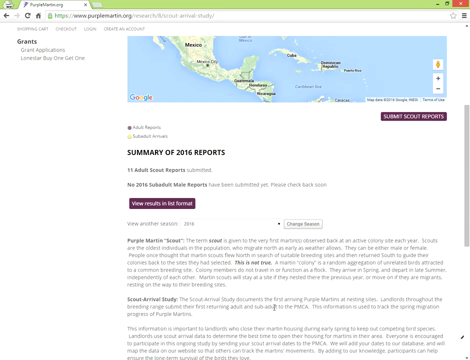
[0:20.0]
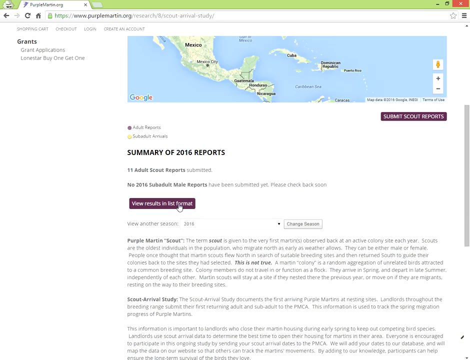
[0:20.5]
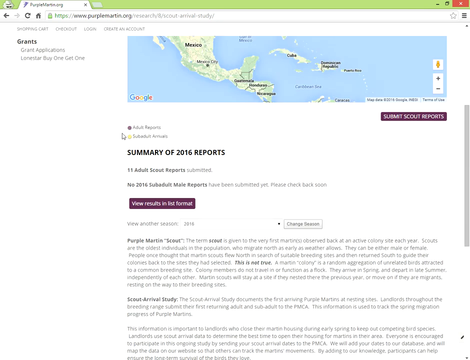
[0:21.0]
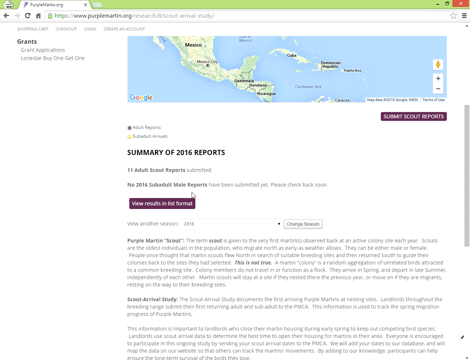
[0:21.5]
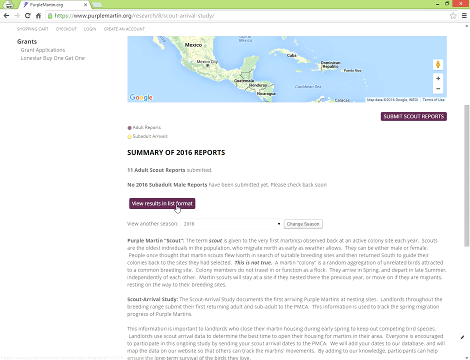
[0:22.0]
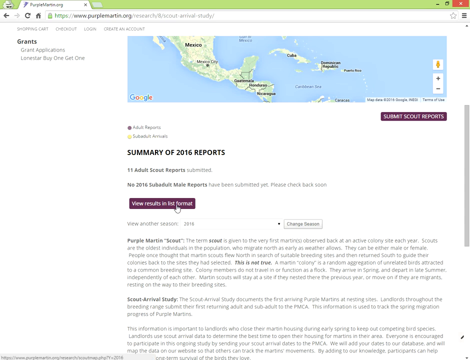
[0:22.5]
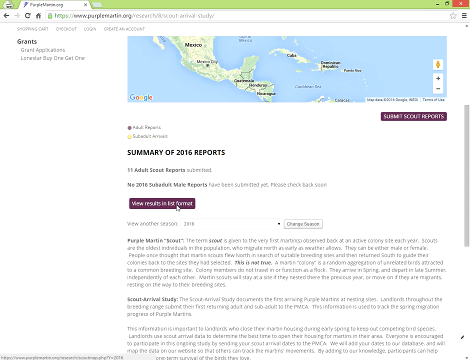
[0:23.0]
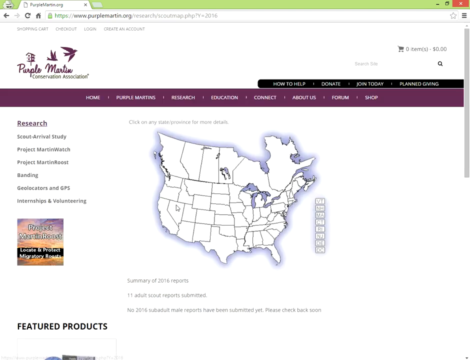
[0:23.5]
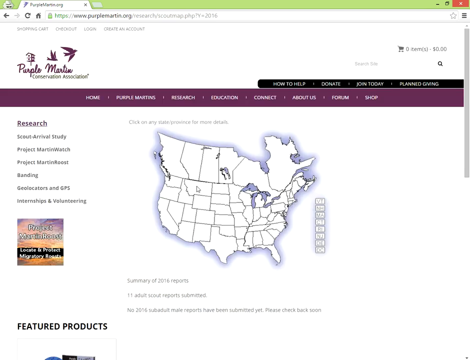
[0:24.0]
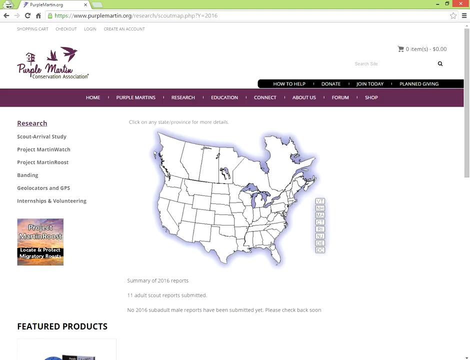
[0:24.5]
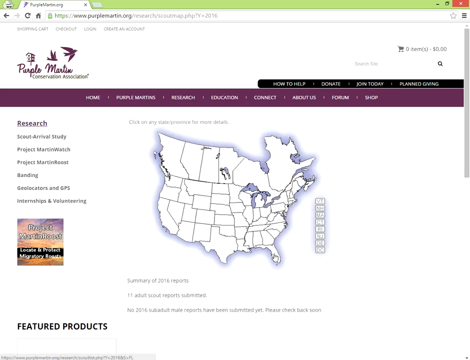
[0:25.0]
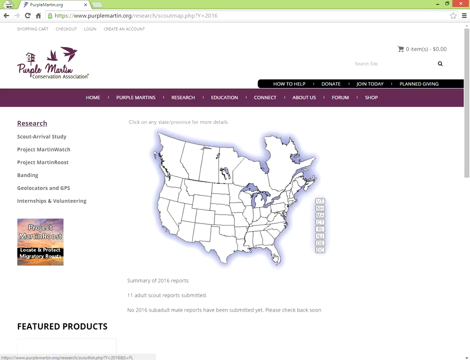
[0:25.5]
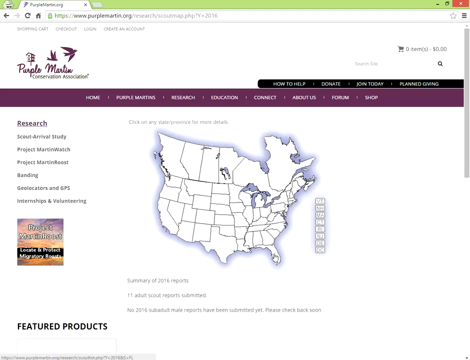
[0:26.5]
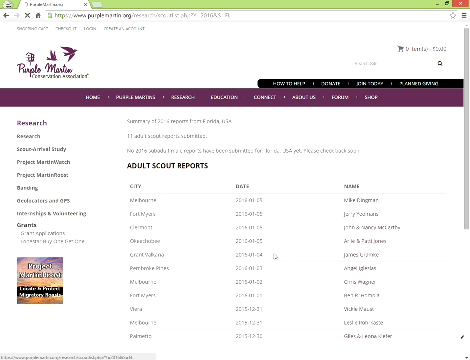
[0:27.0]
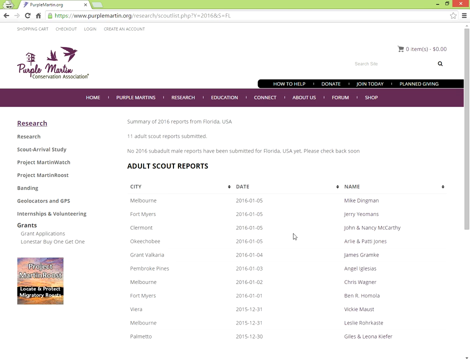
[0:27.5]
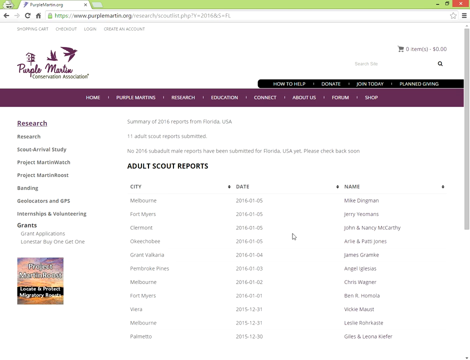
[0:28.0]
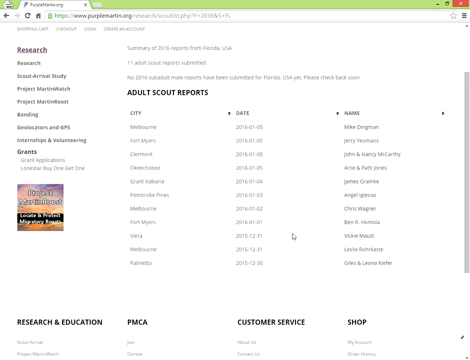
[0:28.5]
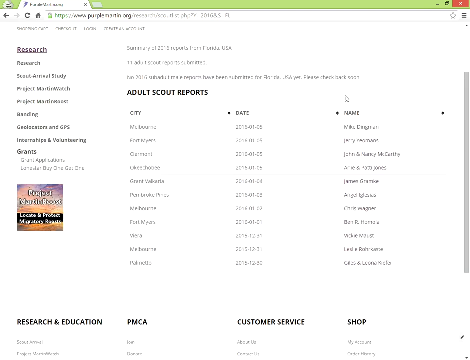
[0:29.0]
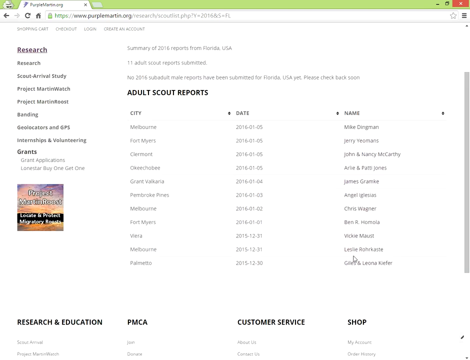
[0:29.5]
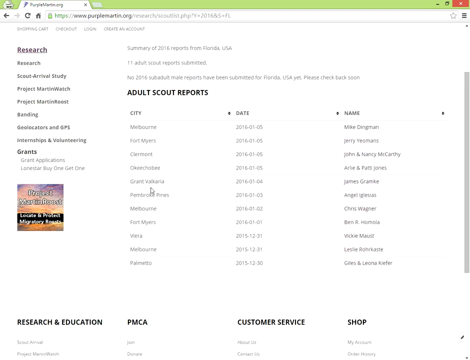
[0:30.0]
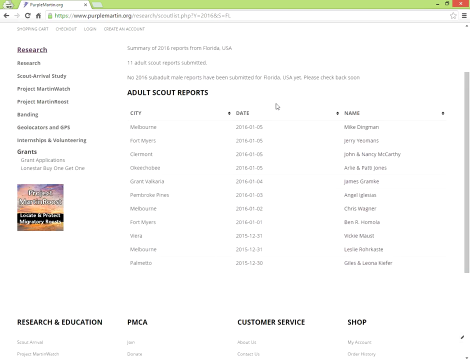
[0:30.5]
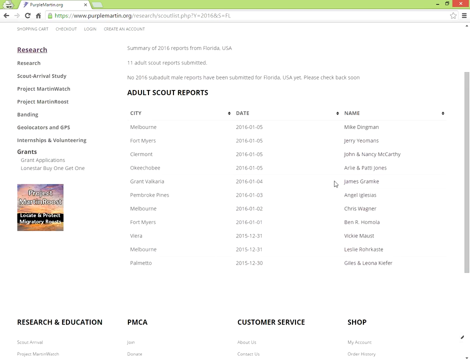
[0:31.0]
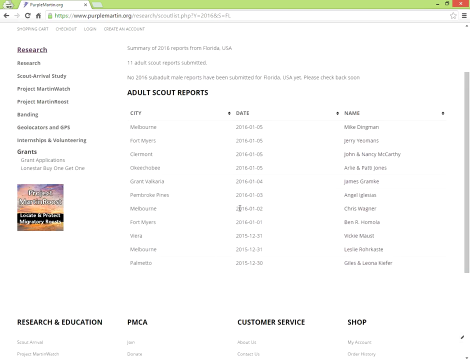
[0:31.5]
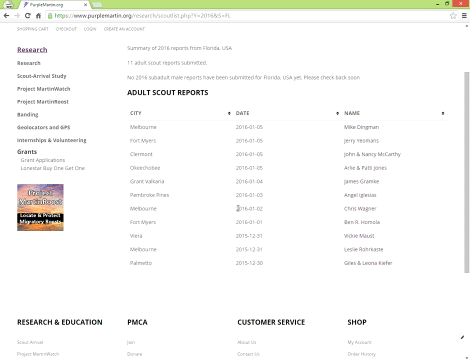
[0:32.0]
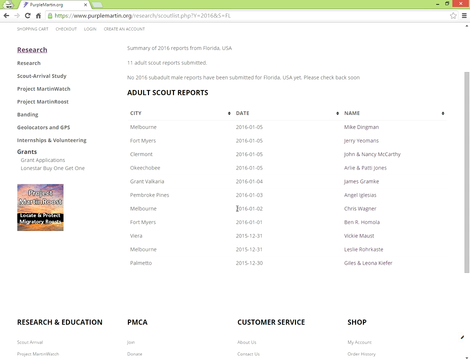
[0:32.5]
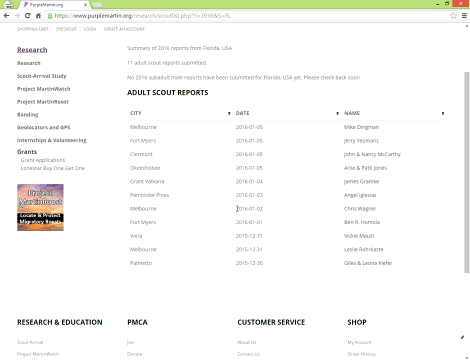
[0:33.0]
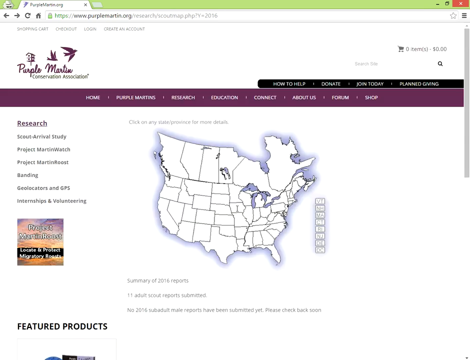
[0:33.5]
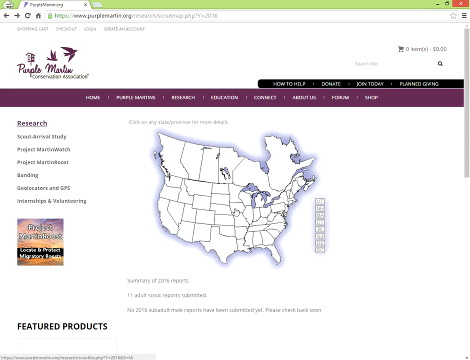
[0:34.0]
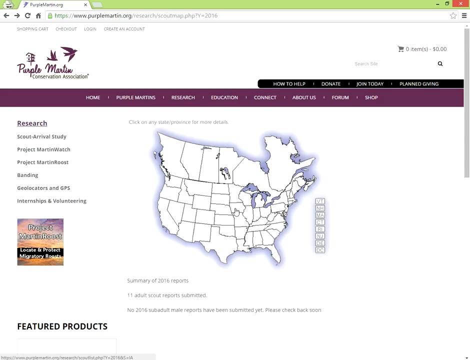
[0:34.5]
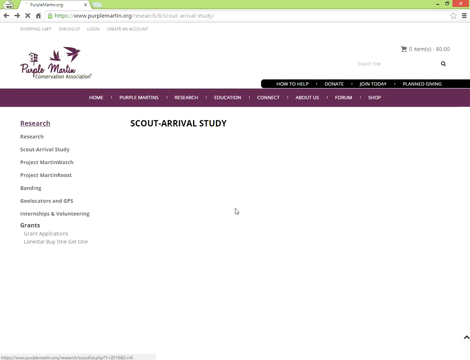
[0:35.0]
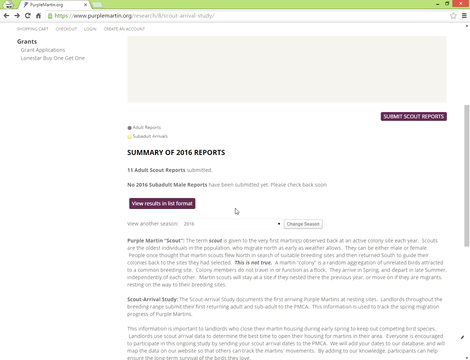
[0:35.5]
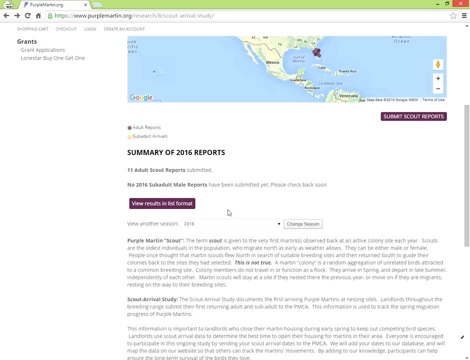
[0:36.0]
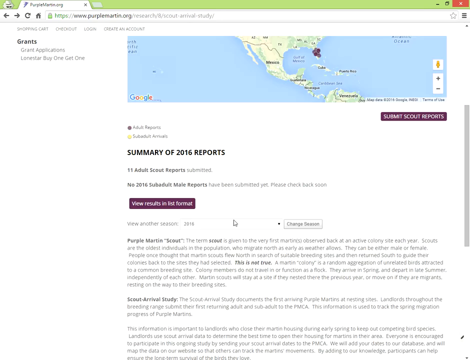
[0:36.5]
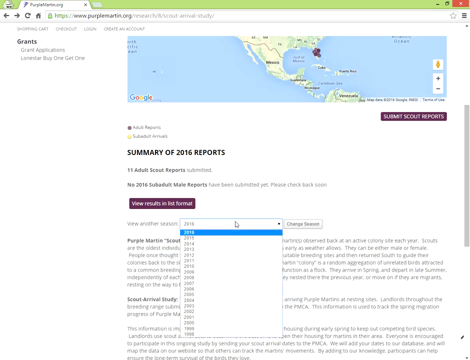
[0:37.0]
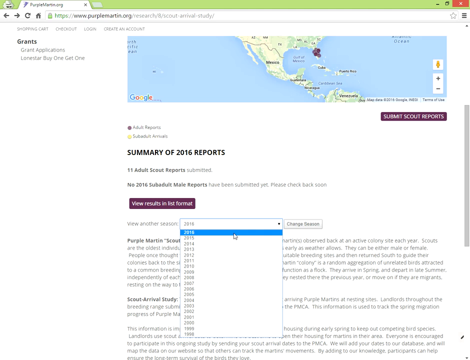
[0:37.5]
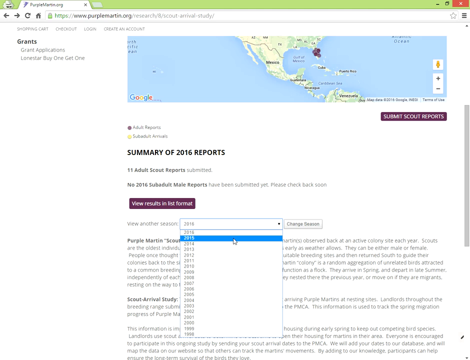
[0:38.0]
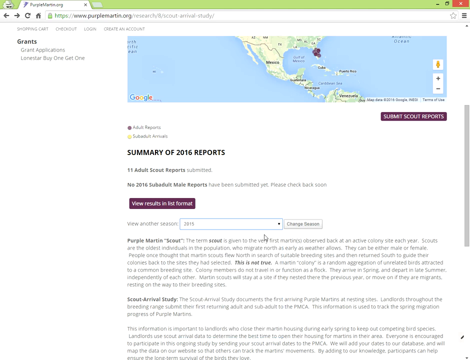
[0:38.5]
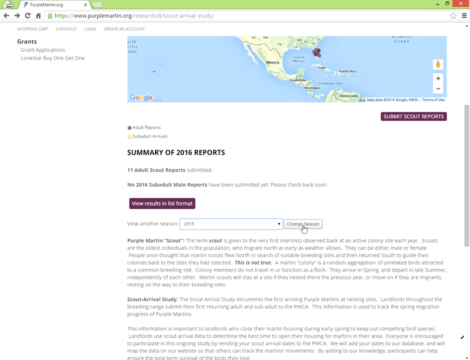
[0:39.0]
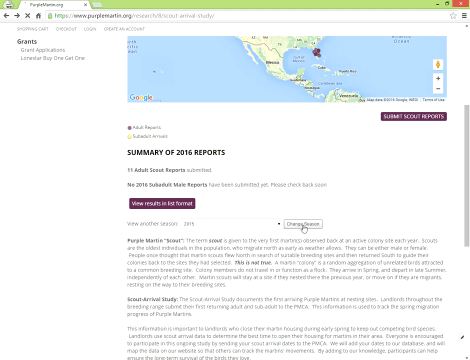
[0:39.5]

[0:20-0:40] A page for grants is shown. On the left side it says "grants", with "grant applications" below it; the rest of the type is very small and hard to read. The mouse pointer hovers over a button that says "view results in list format" and clicks it, leading to a page that says "research" showing adult scout reports. There is a list of places that appear to be in Florida, with a column for date and a column for name, which appears to be the name of the person who saw the Martin. There is also a clickable map of the United States where users can pick an area to search.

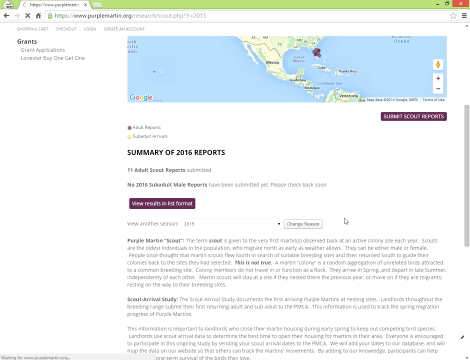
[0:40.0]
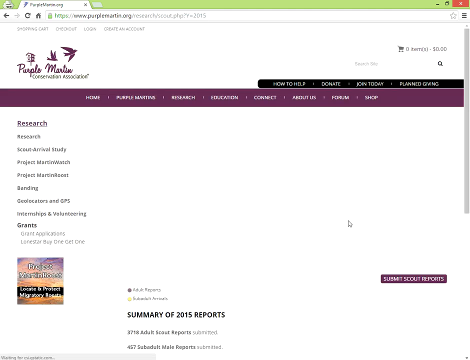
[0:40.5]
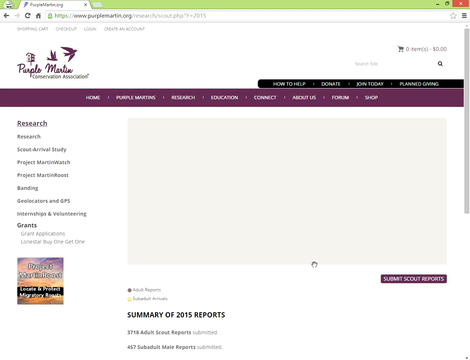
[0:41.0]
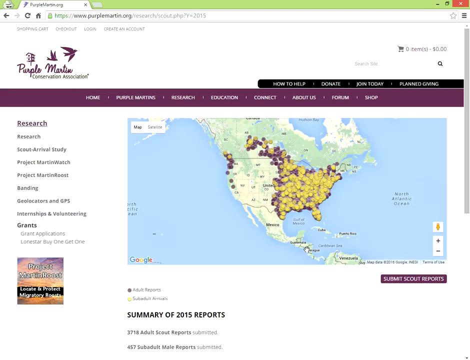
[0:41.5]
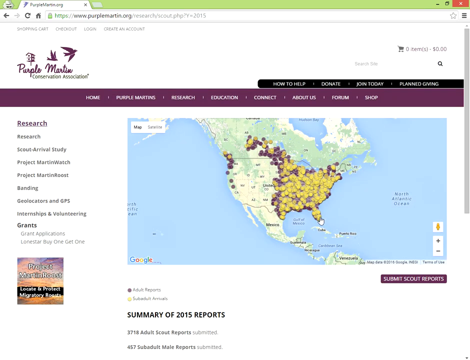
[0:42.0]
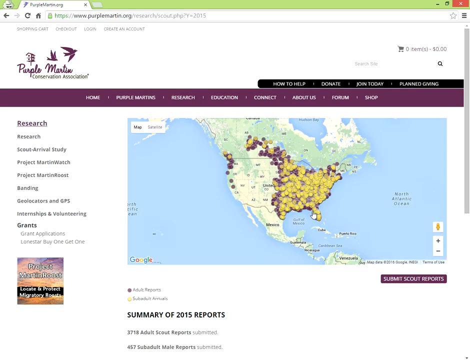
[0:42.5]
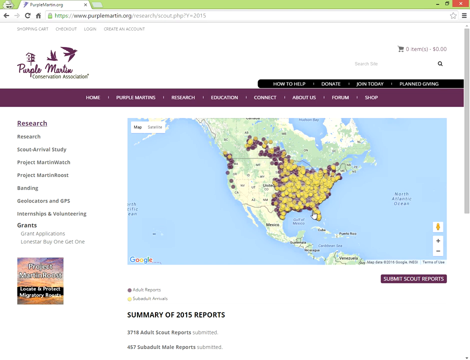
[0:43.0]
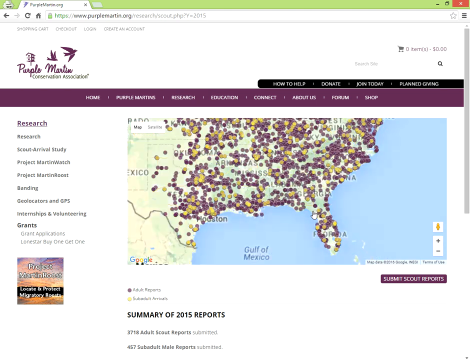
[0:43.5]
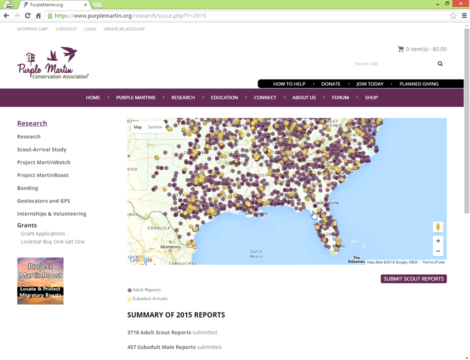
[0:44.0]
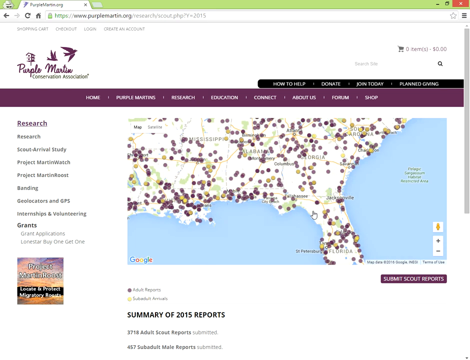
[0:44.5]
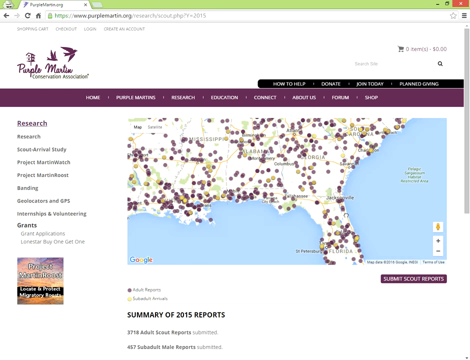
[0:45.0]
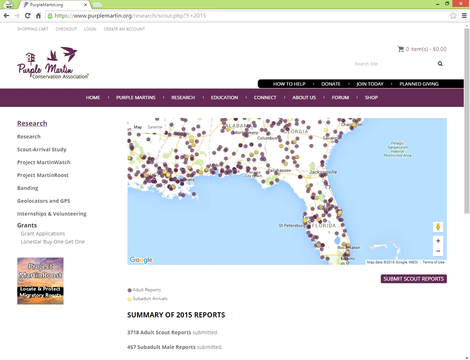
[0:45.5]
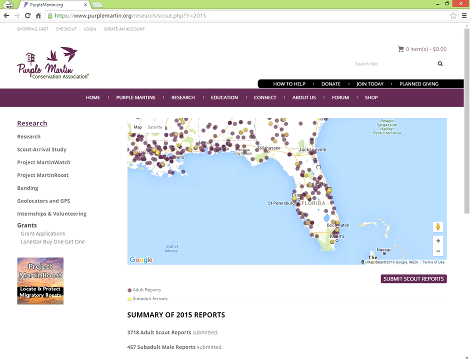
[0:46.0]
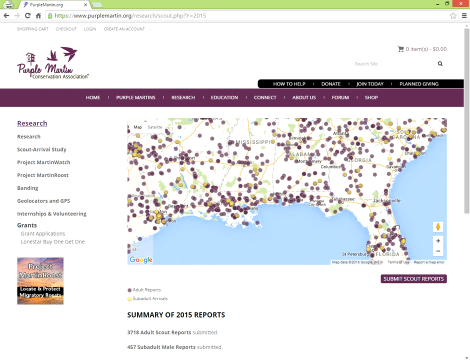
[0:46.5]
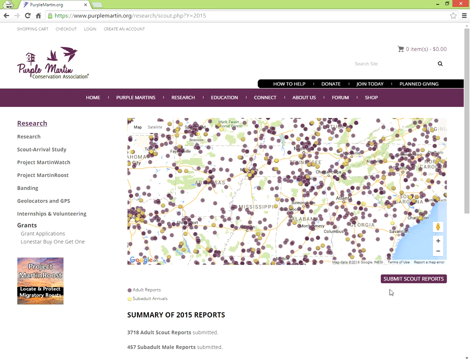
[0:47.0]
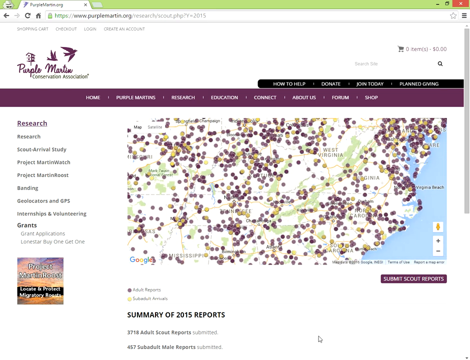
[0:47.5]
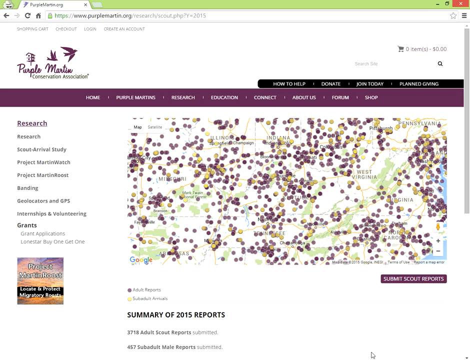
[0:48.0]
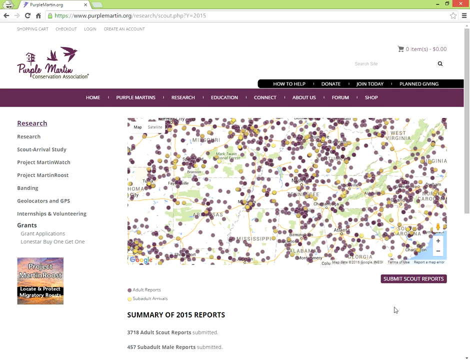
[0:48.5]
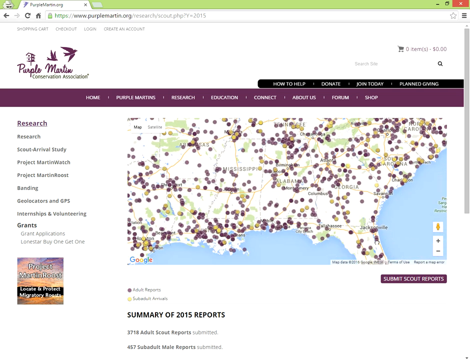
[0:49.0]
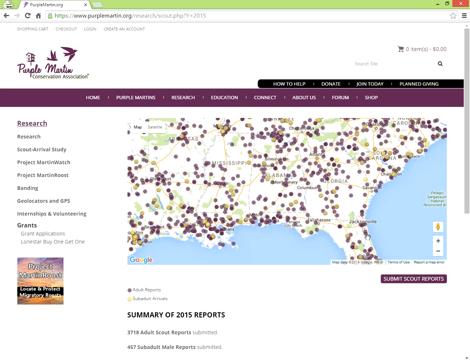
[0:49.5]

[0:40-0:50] The view is apparently on the research page, with a map toward the top covering many purple and yellow dots. The purple dots are adult reporters; the label for the yellow dots is unreadable, but the two colors indicate different things. The user zooms in a bit and moves the map around within the window to show the southeastern region of the United States.